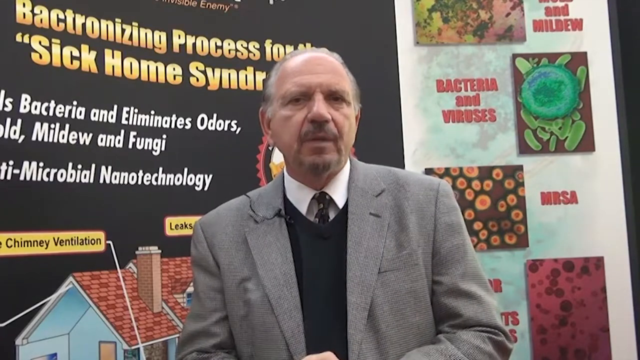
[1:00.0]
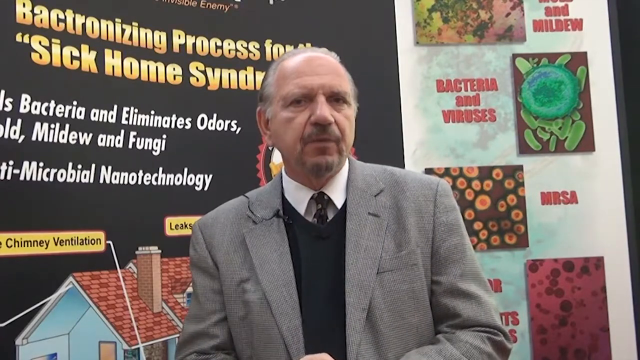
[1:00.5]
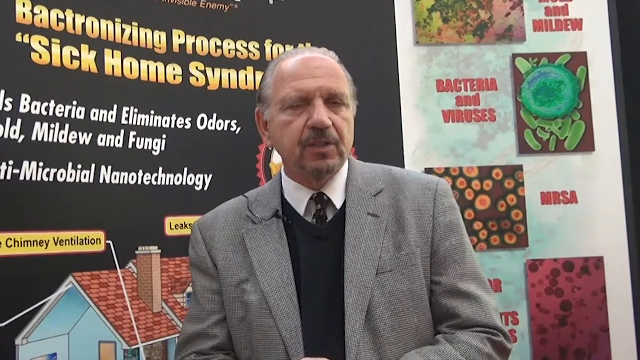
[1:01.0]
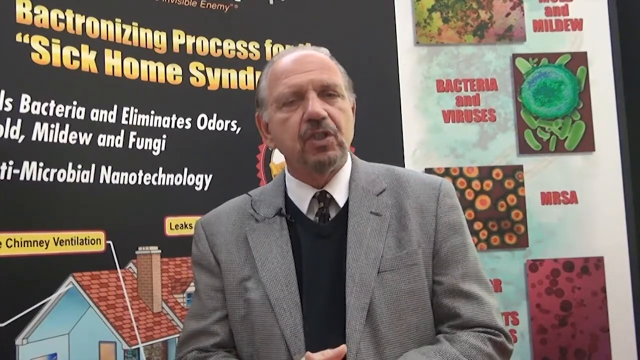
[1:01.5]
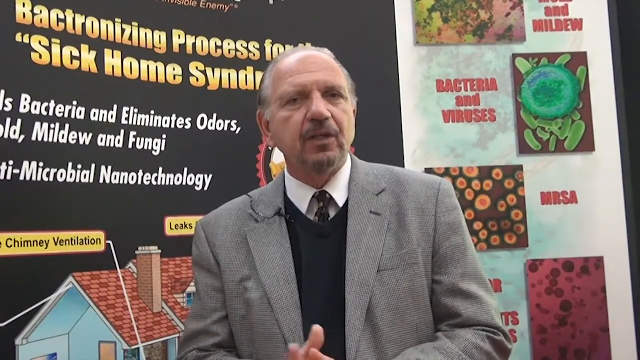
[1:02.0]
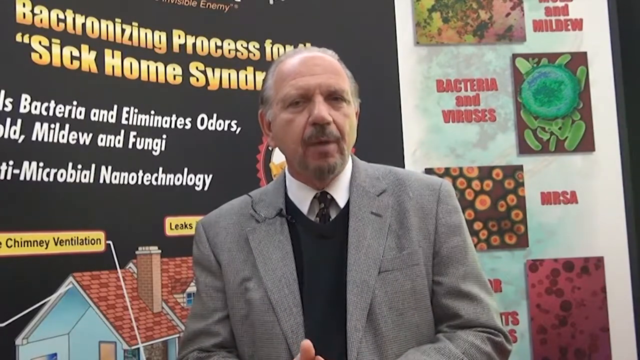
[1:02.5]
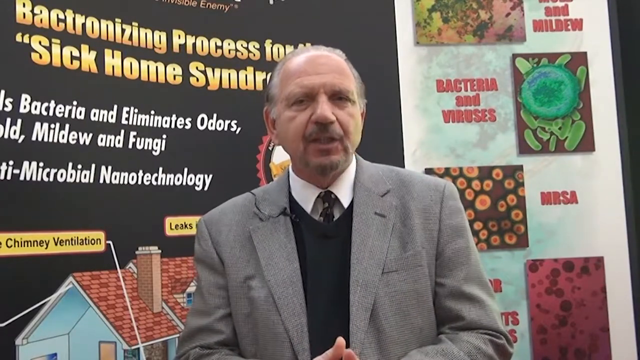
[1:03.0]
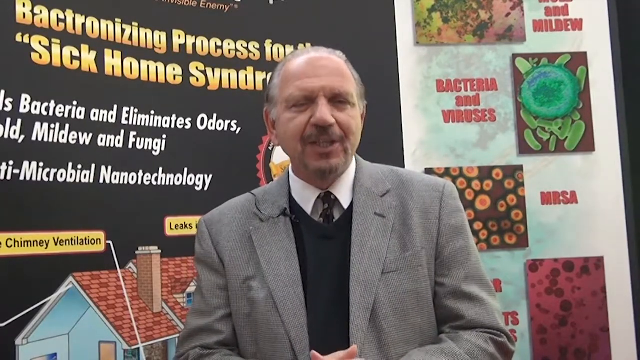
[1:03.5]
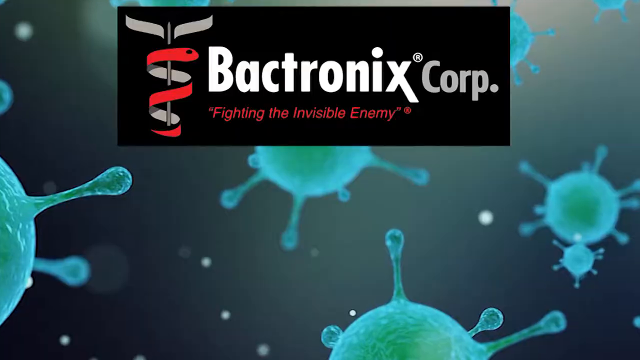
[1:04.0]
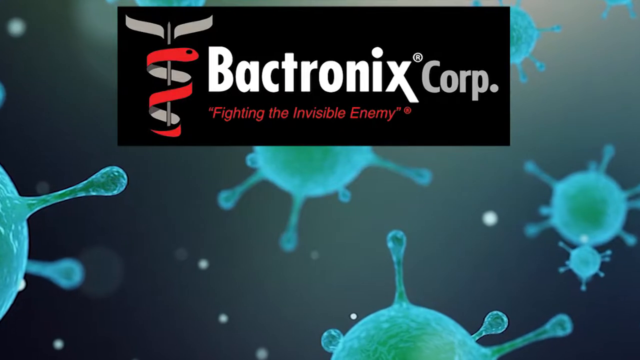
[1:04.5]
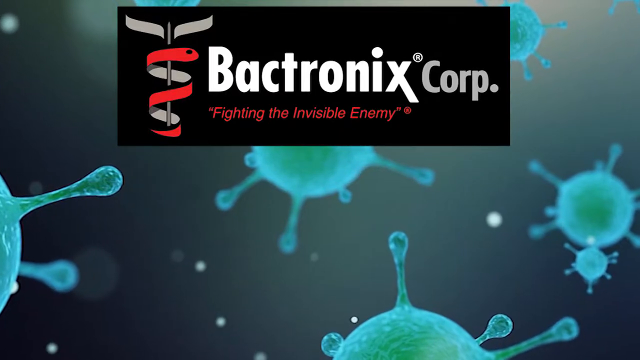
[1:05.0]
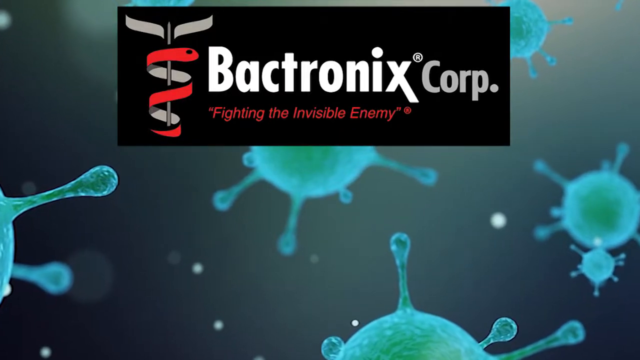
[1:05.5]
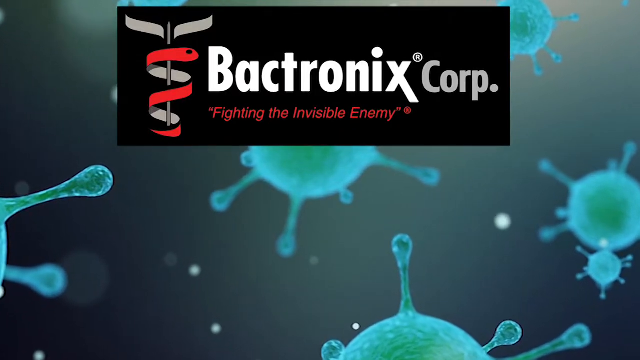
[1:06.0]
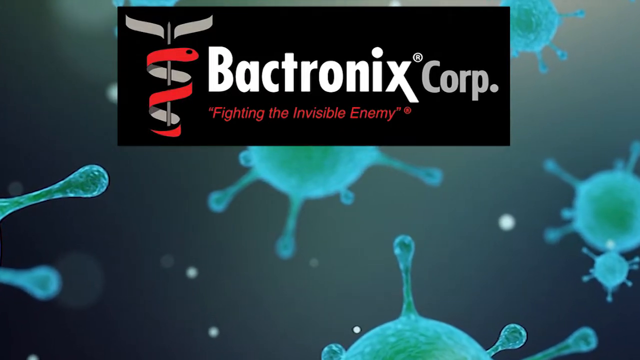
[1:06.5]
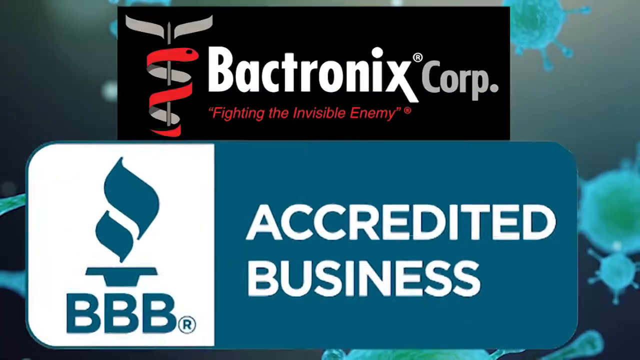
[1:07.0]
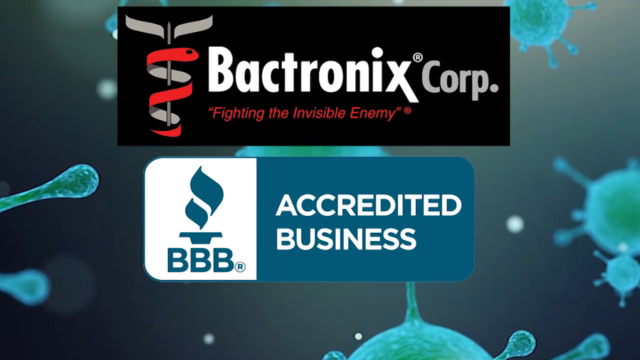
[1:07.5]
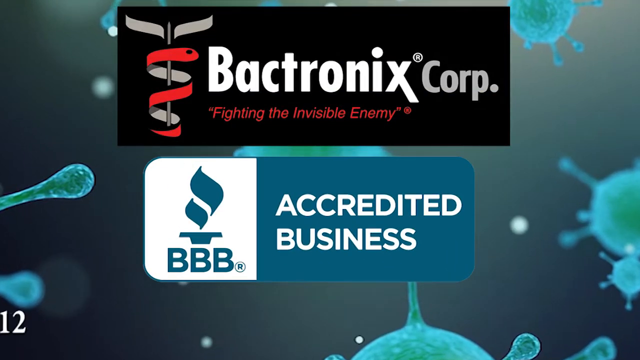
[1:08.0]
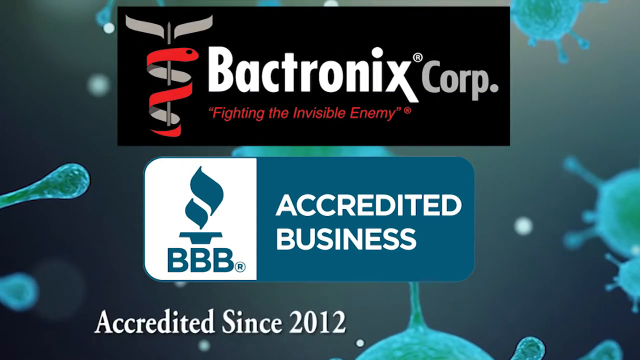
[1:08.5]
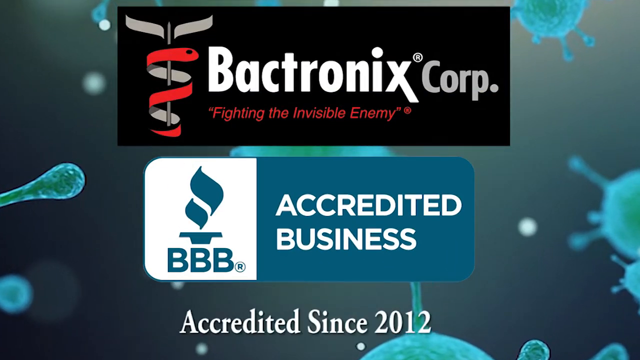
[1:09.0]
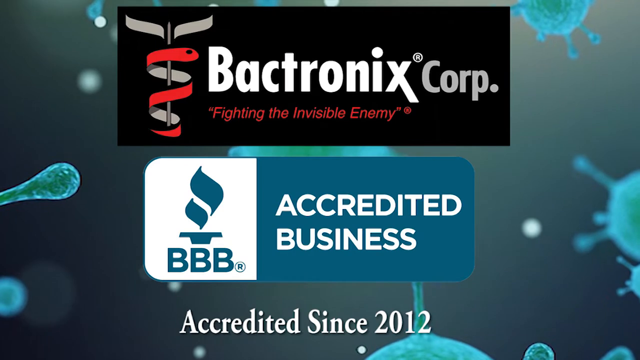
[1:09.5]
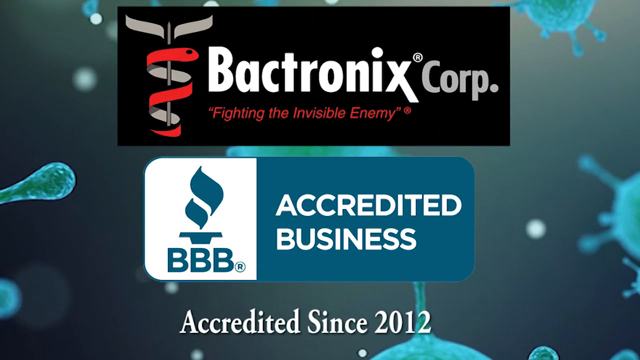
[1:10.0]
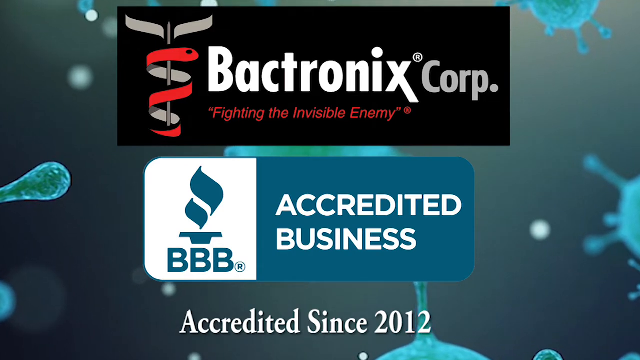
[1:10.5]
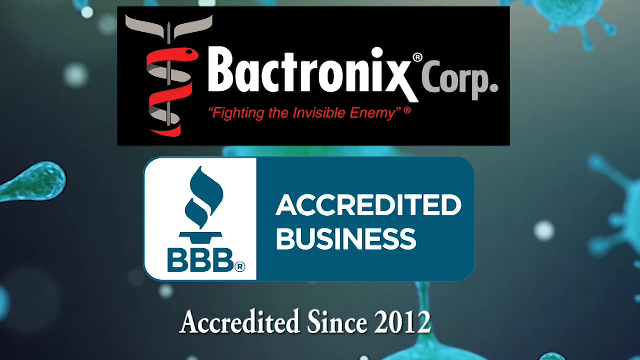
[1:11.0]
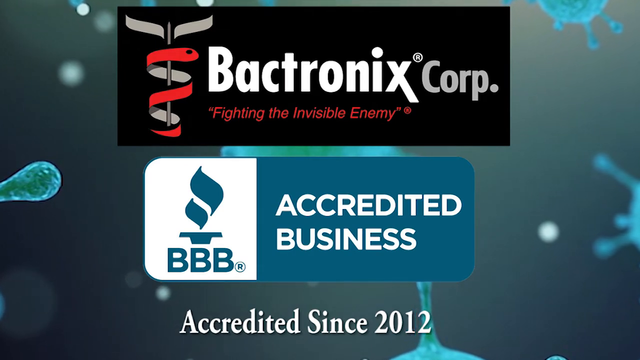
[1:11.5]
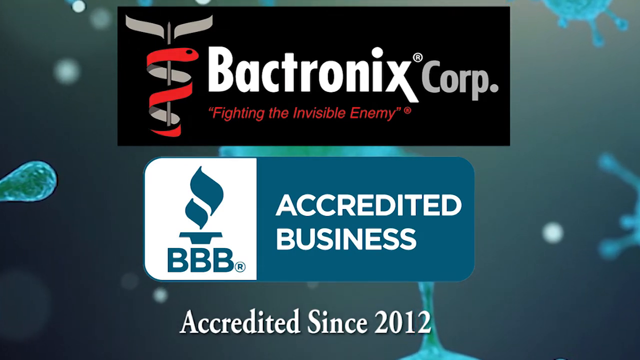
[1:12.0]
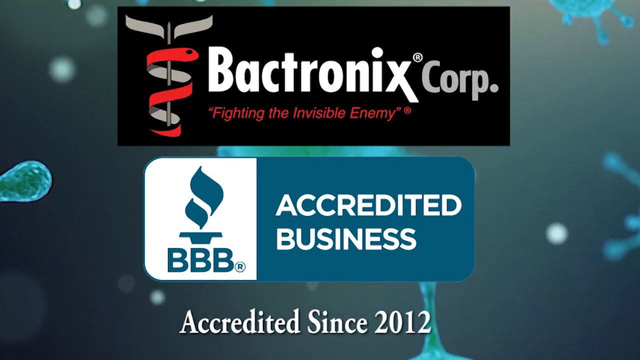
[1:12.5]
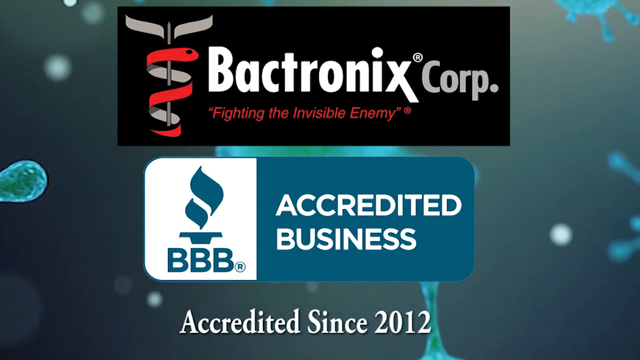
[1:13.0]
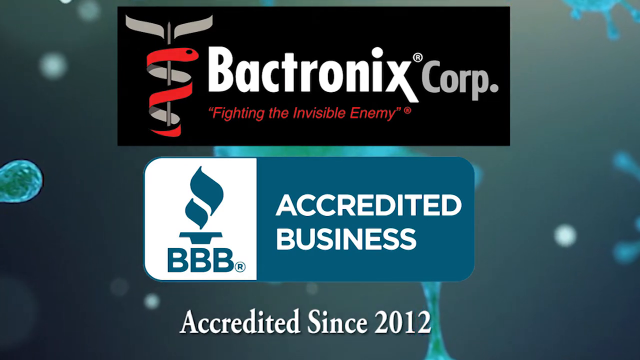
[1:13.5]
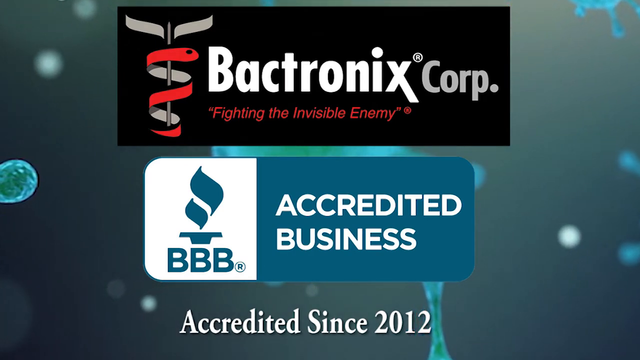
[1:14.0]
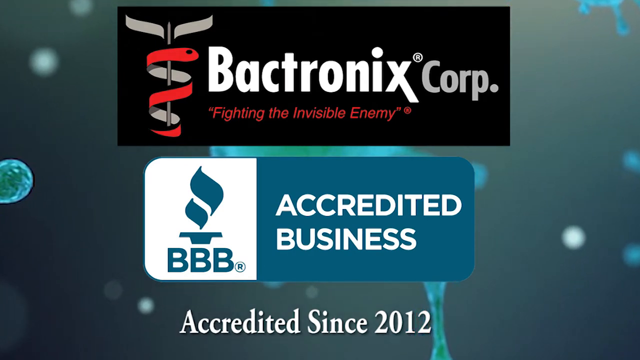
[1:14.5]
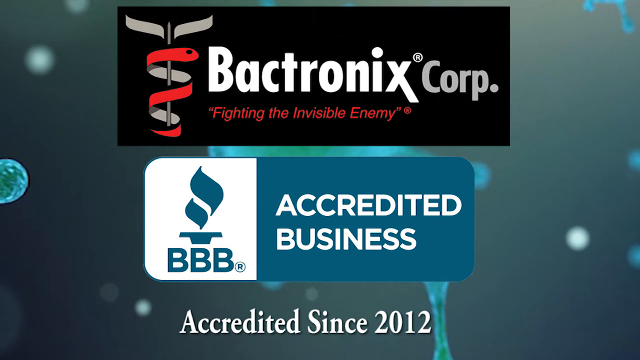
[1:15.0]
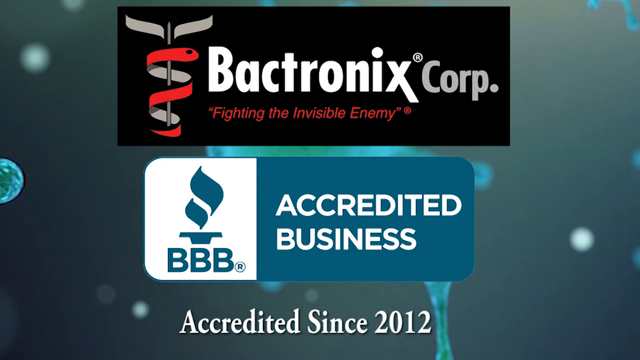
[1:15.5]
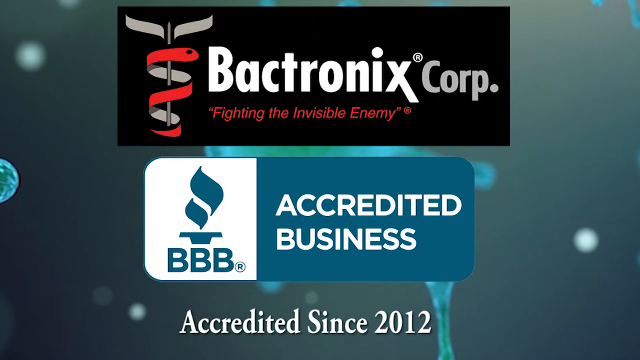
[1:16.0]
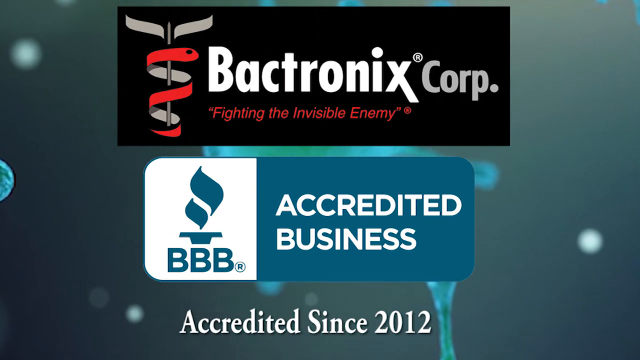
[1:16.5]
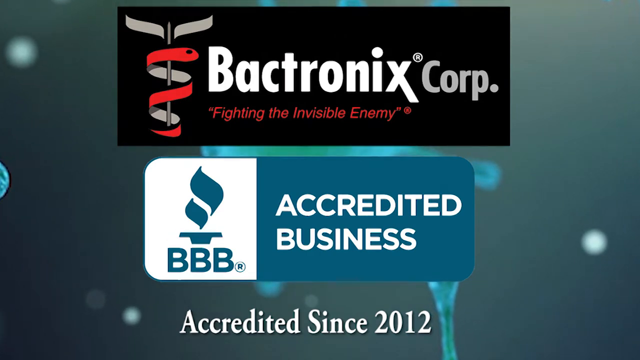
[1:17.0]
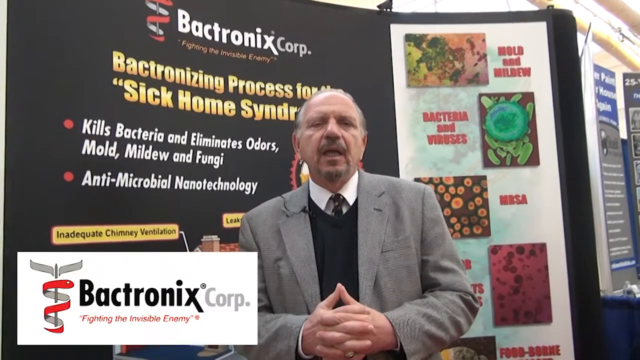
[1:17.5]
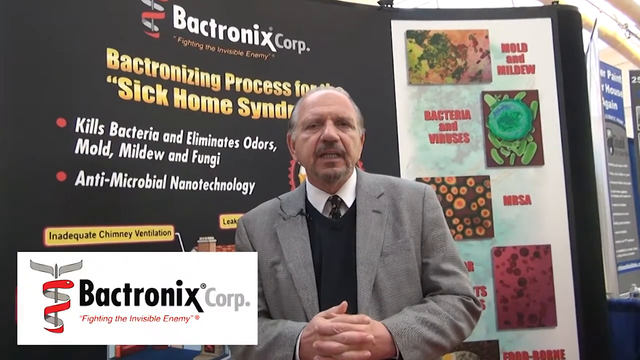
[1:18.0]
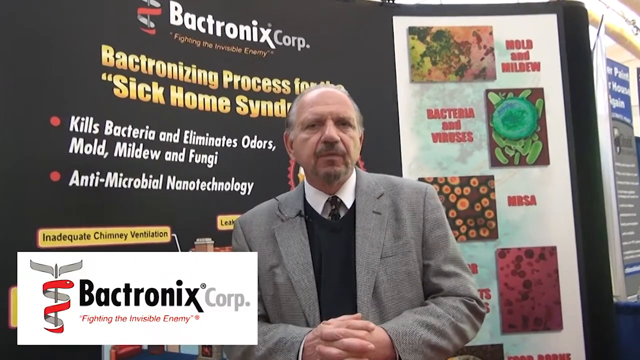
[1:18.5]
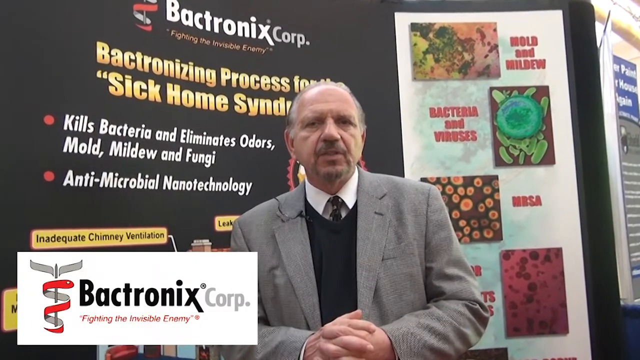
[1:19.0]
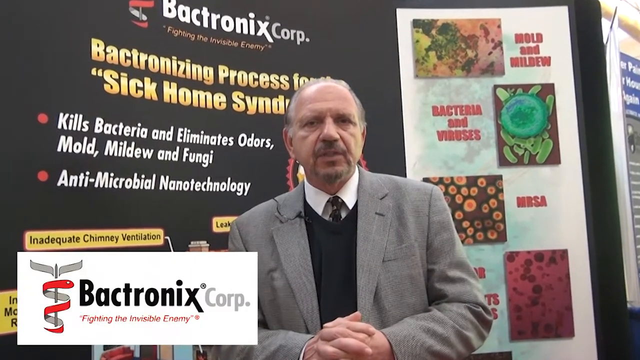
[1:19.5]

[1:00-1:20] A man stands in front of a backdrop depicting viruses and bacteria and advertising a "bactronizing" process to eliminate them. He wears a light gray jacket, a black sweater vest, and a white shirt and tie, and nods gently as he speaks. After a few seconds the screen switches to a graphic of what look like blue and green viruses floating around the screen against a black background. At the top of the screen a black text box reads "Bactronix Corp. Fighting the Invisible Enemy," with a stylized red and gray Caduceus graphic on the left. Below it, a text box appears with the Better Business Bureau logo and "BBB" on the left and "Accredited Business" on the right. Below that, the text "Accredited Since 2012" appears to slide in from the left of the screen.